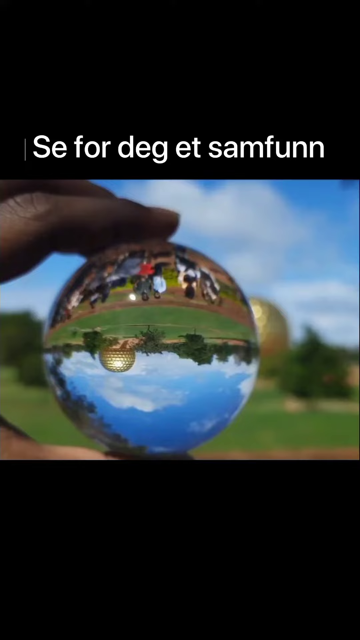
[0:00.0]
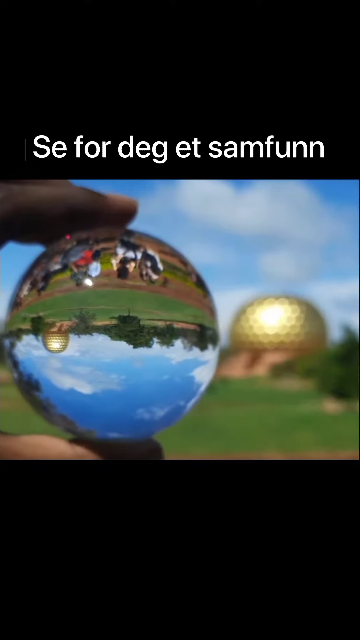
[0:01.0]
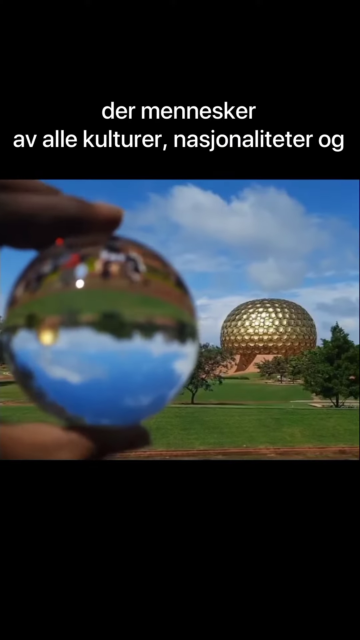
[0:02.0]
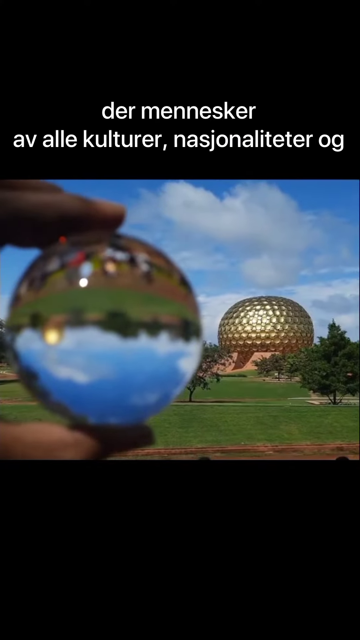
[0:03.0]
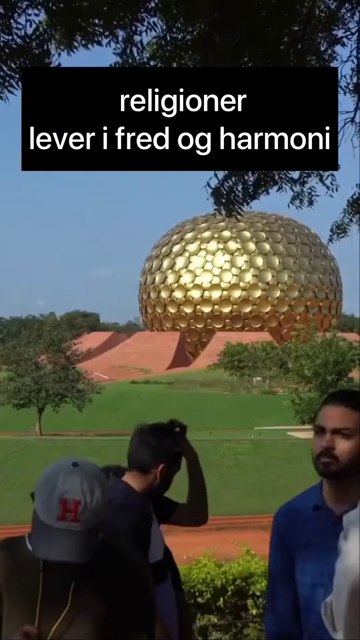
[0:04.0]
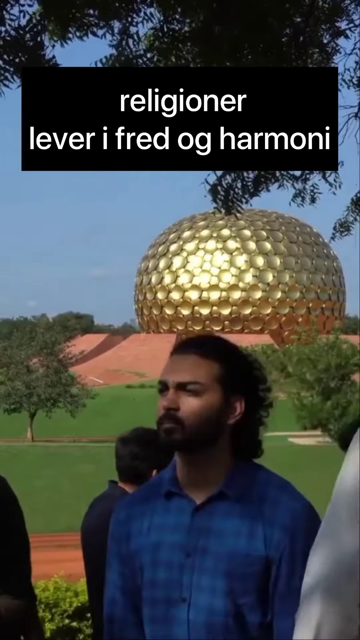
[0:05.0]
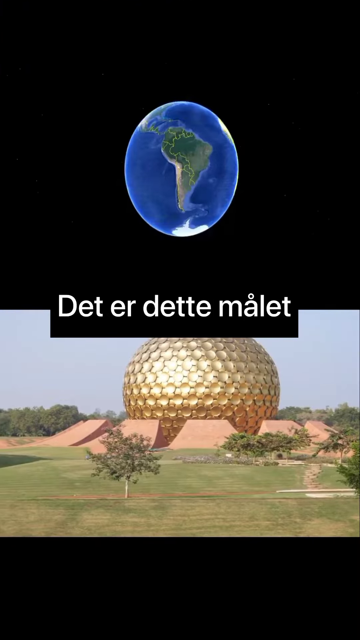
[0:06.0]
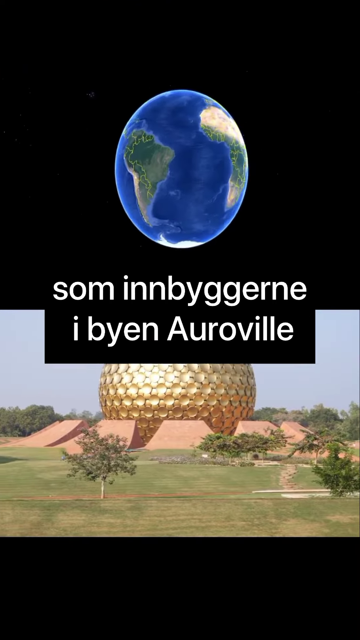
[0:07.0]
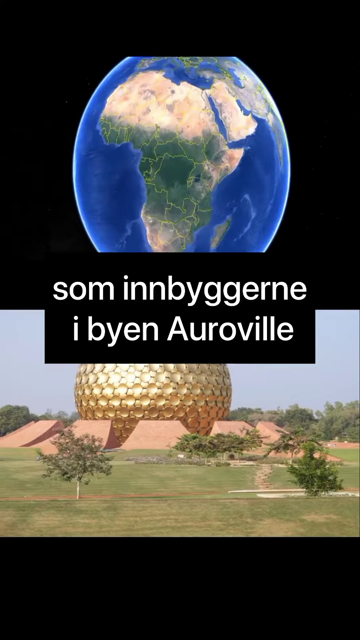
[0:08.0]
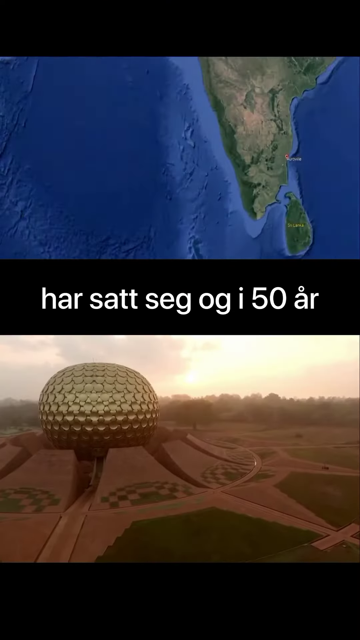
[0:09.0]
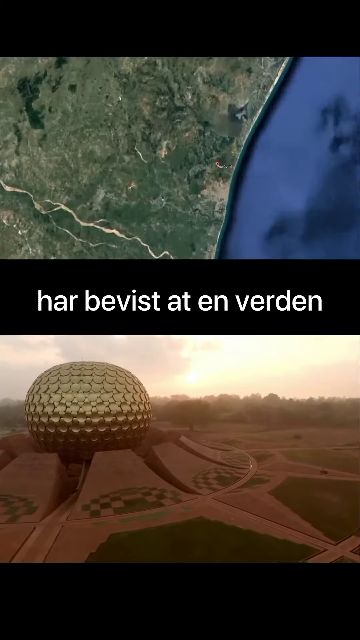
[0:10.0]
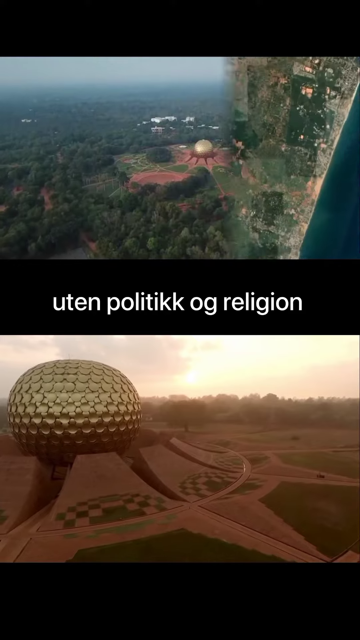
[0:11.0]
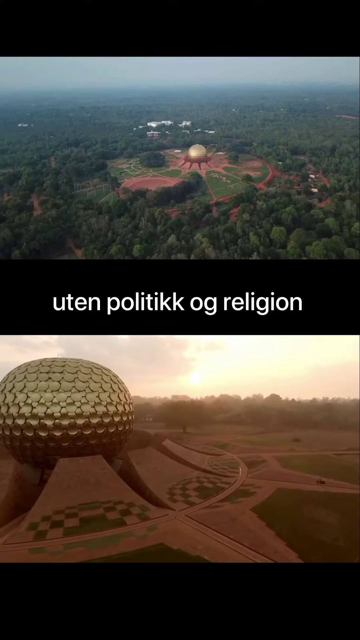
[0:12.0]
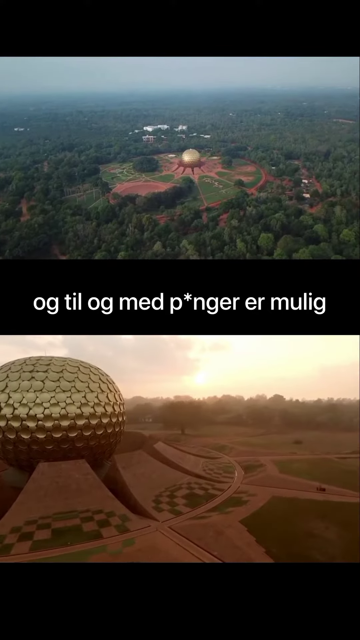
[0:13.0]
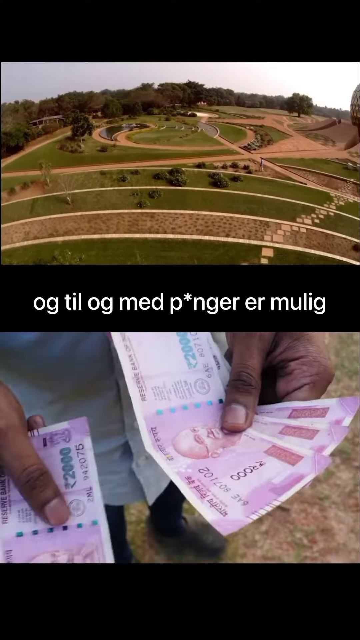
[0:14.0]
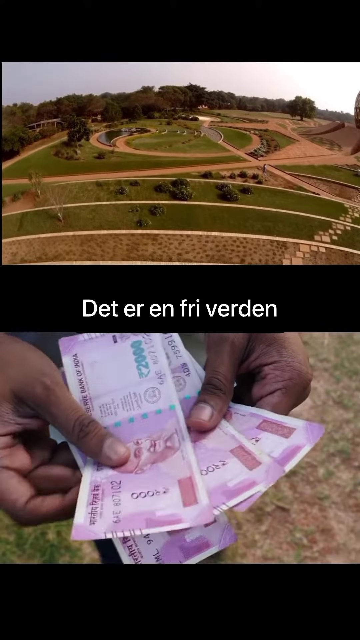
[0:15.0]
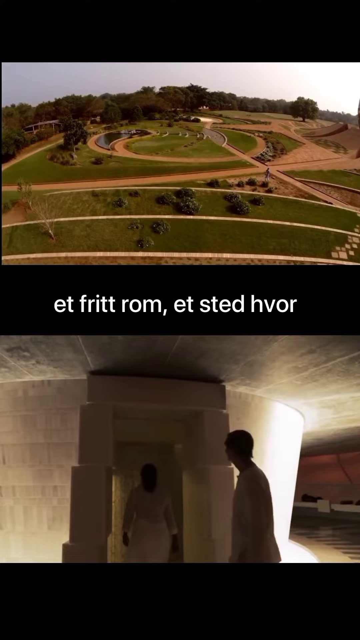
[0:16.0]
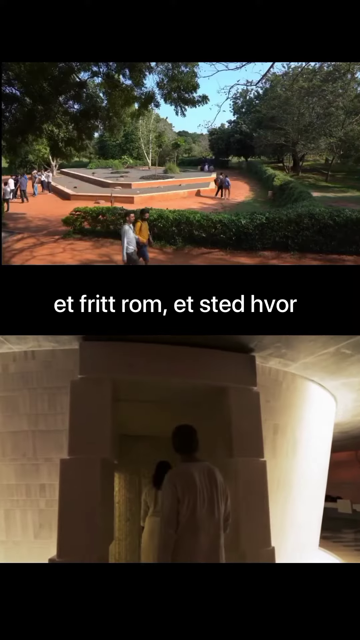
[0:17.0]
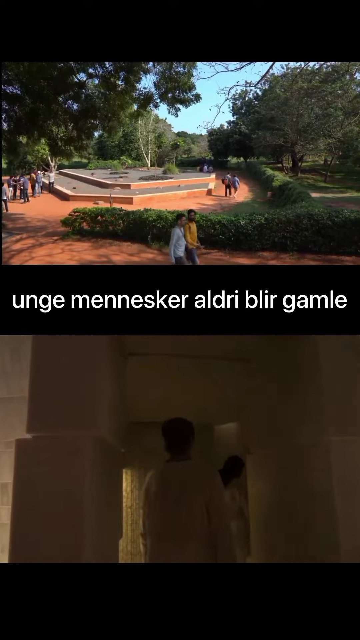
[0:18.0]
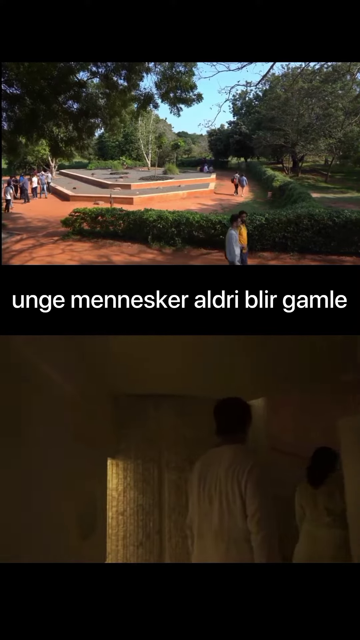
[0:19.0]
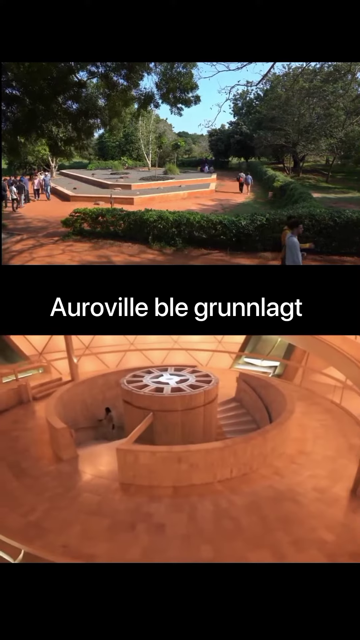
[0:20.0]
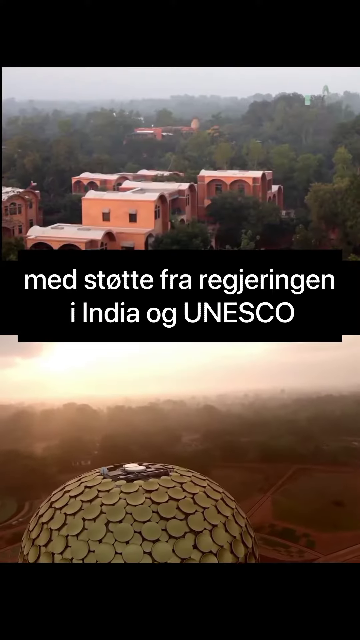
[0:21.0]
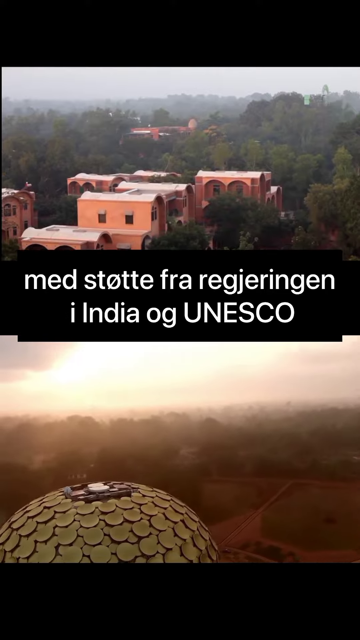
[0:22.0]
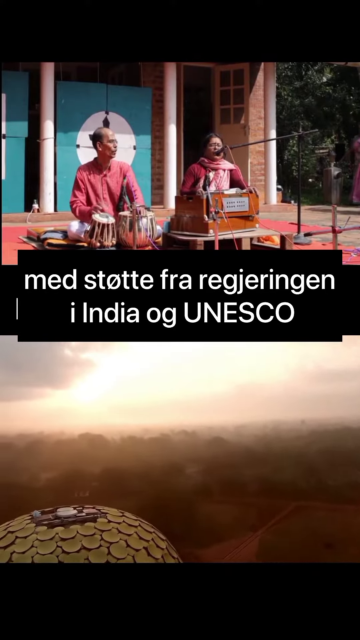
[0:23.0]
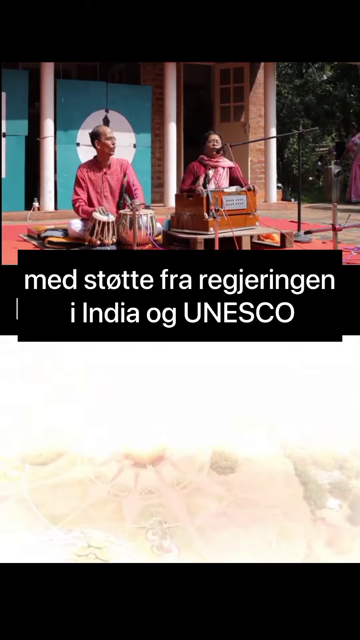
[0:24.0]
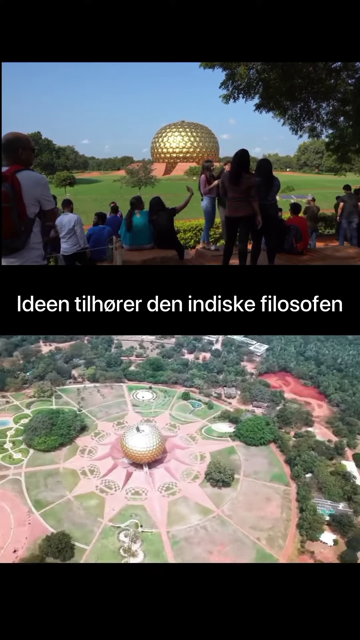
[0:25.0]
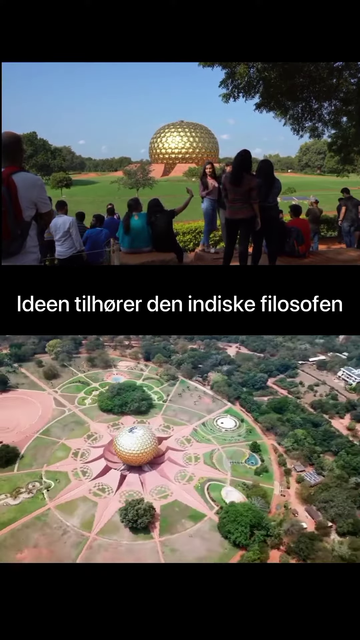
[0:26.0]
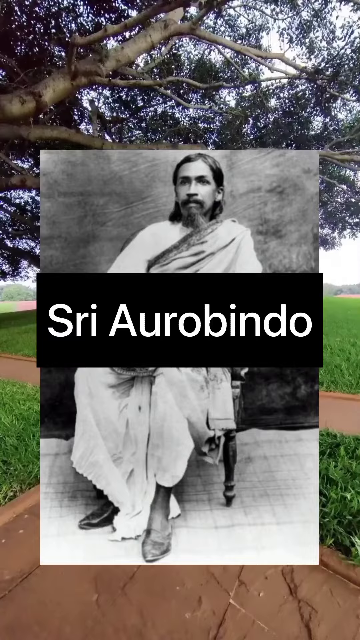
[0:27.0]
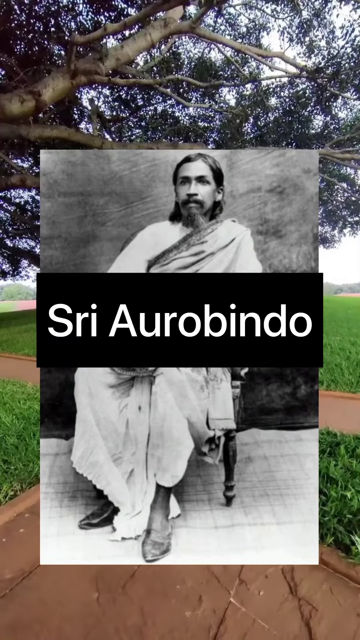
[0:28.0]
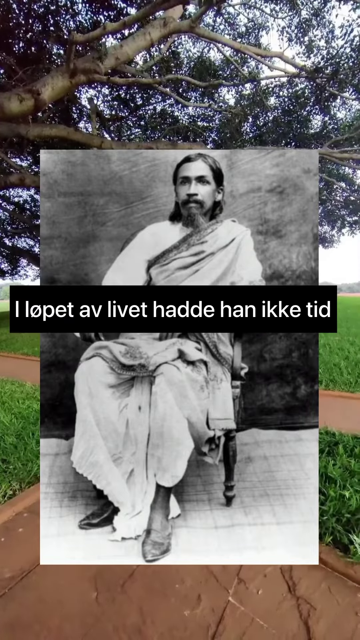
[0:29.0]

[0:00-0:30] The video appears to be possibly a tourism video about India. The screen is split into two, apparently by a horizontal line through the middle, and it seems to show places within India; the word "India" flashes up on screen. Text appears throughout, in a language that is not readable to the viewer. It shows many places, including temples. The style is arty, with someone looking through a glass. The video seems to focus on one particular building that somewhat resembles the Epcot Center but clearly is not it; the building is surrounded by forest and looks well built.